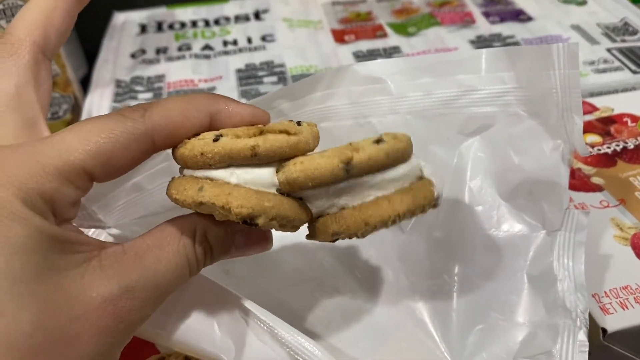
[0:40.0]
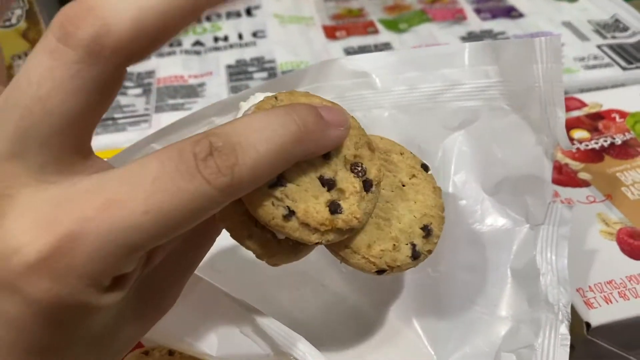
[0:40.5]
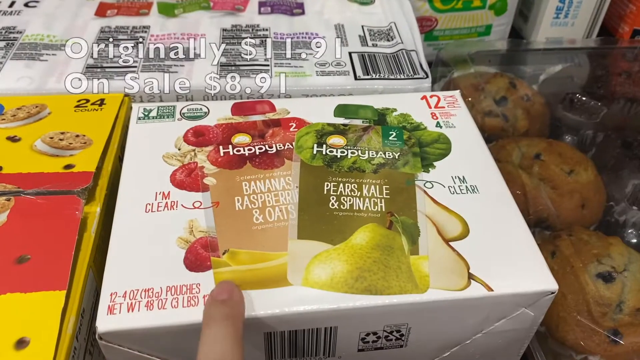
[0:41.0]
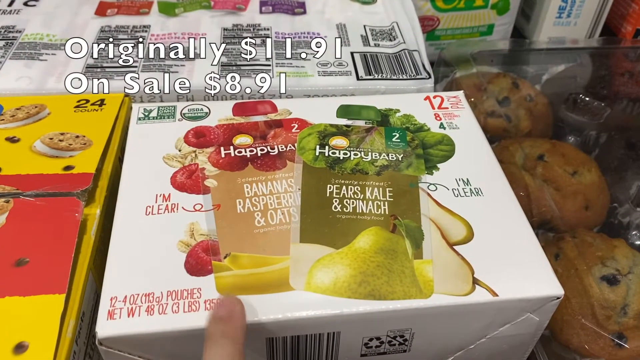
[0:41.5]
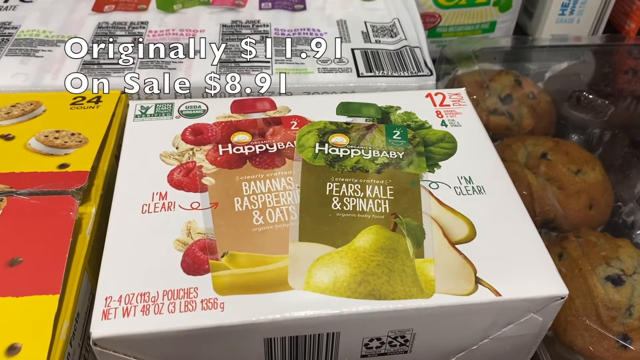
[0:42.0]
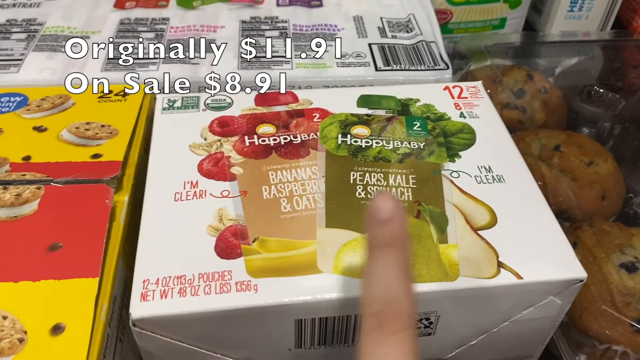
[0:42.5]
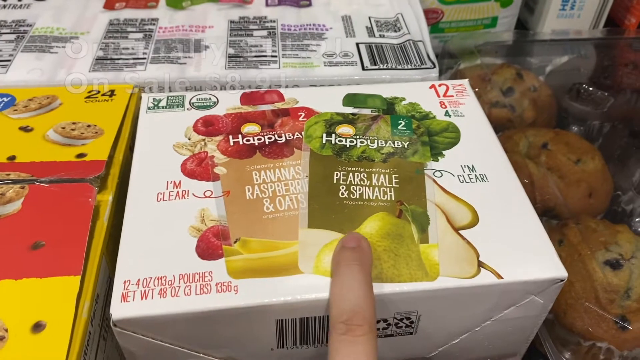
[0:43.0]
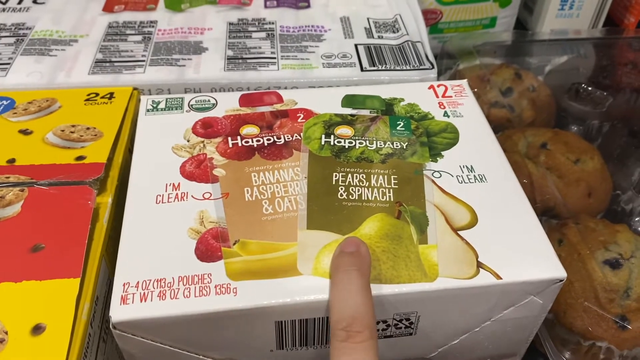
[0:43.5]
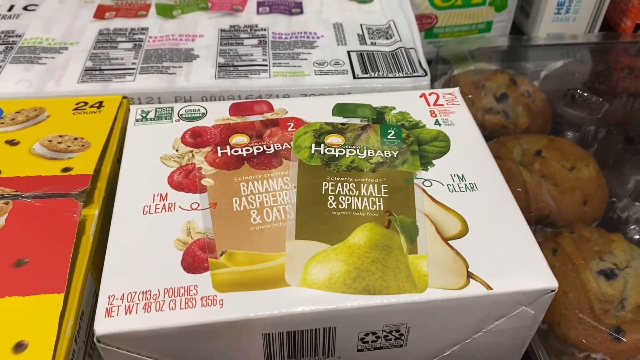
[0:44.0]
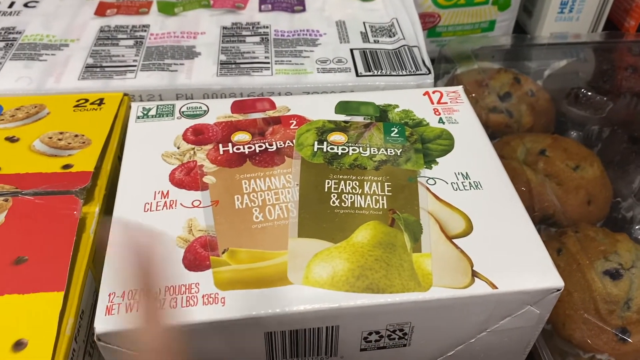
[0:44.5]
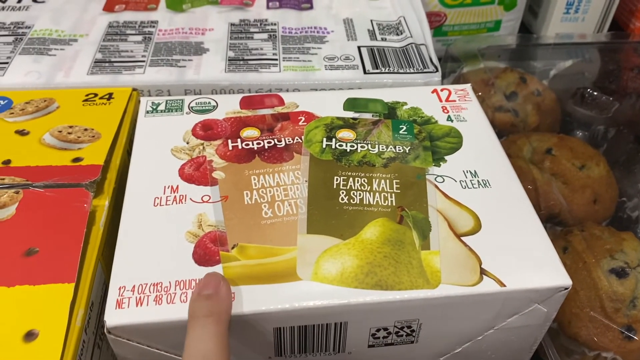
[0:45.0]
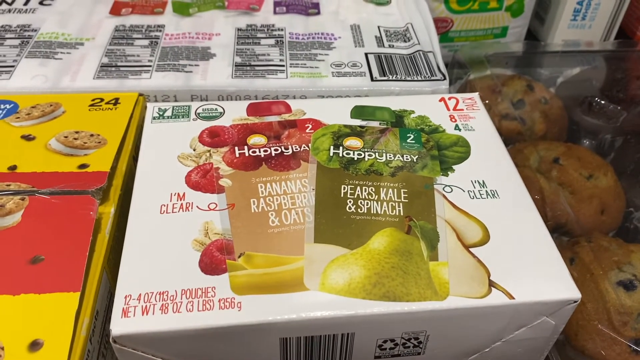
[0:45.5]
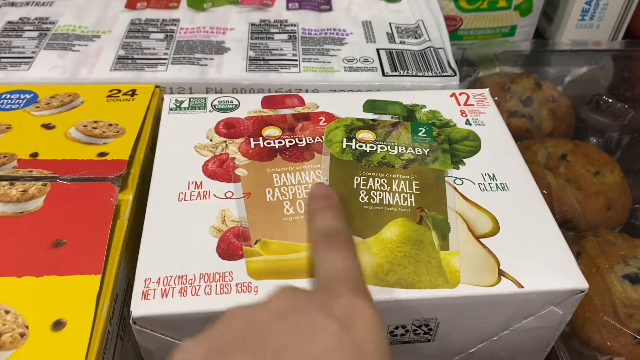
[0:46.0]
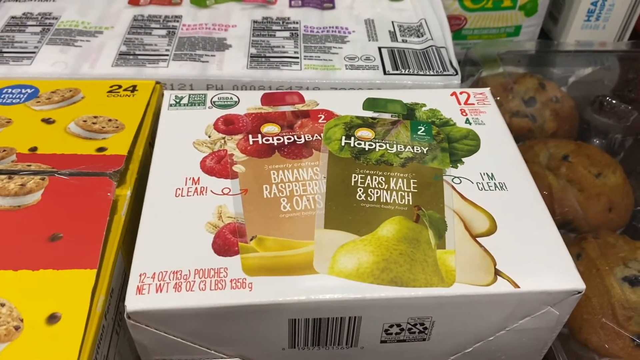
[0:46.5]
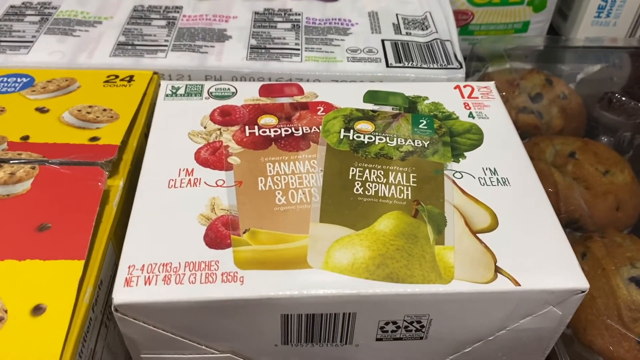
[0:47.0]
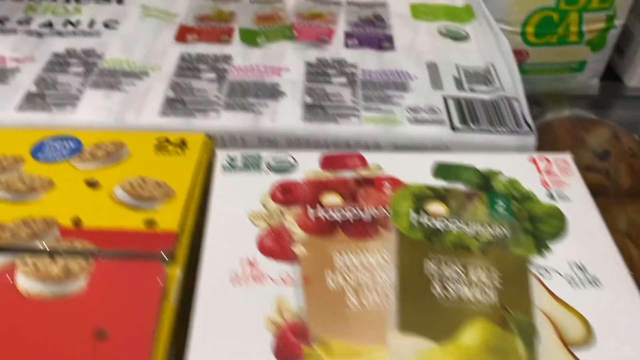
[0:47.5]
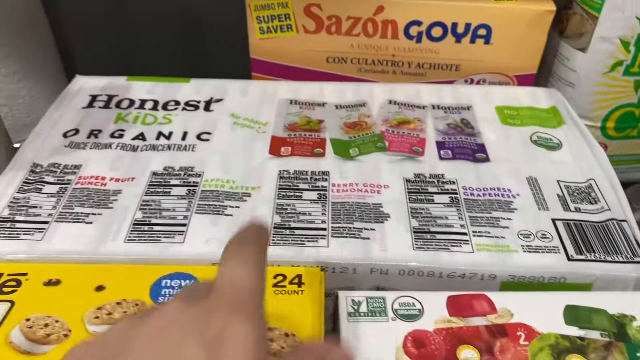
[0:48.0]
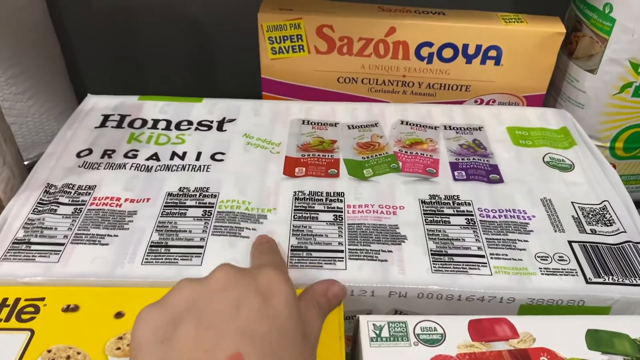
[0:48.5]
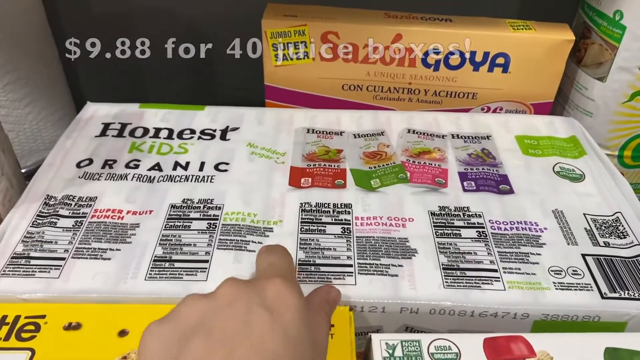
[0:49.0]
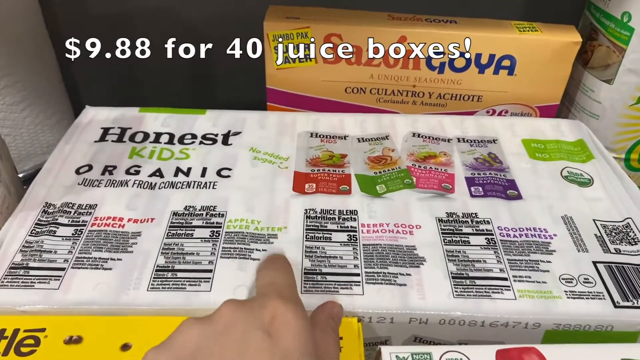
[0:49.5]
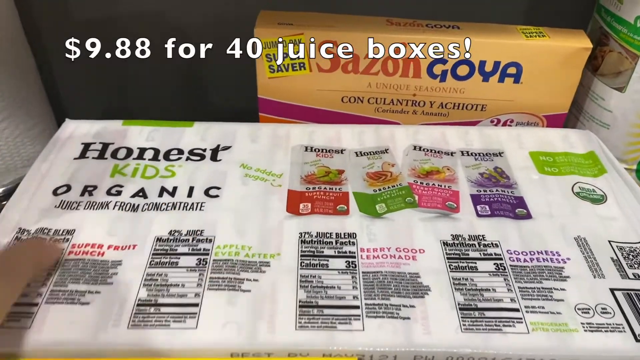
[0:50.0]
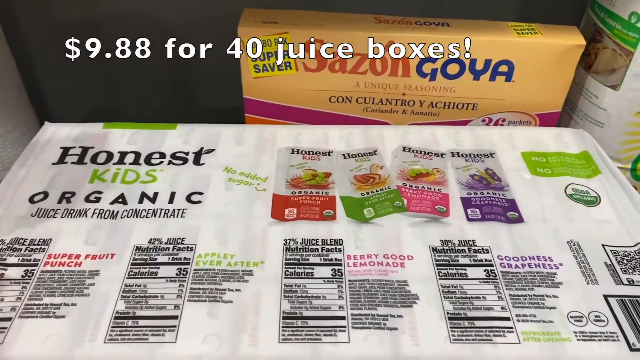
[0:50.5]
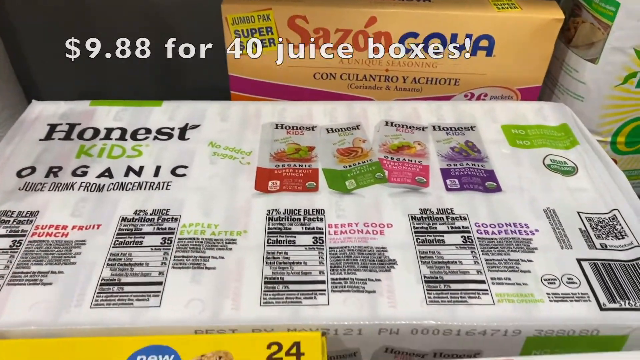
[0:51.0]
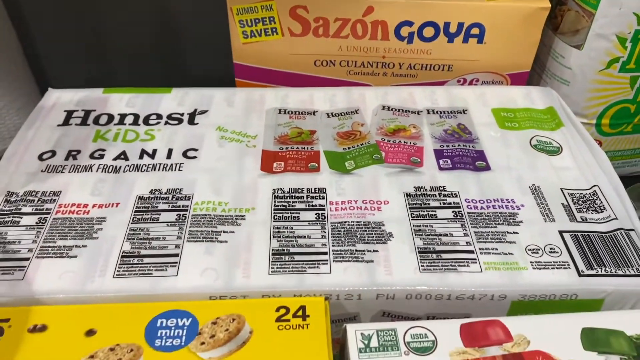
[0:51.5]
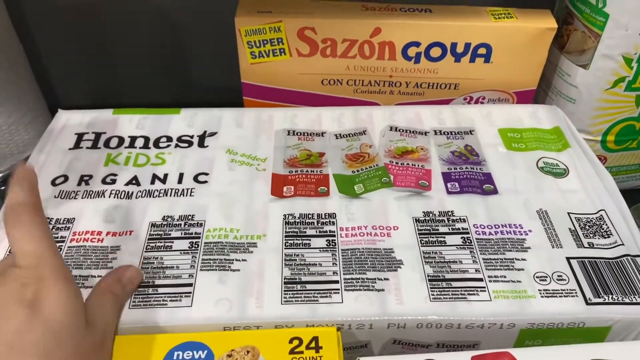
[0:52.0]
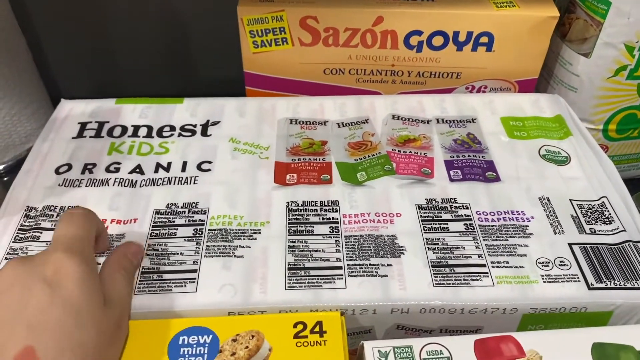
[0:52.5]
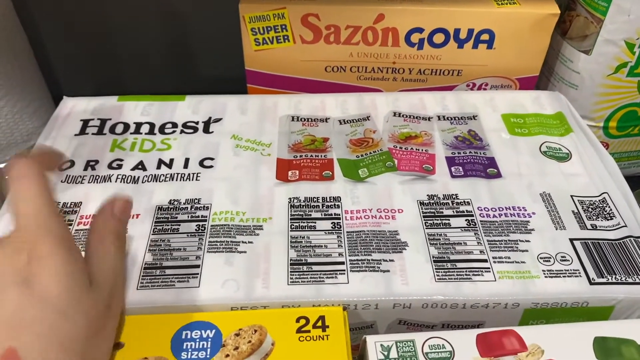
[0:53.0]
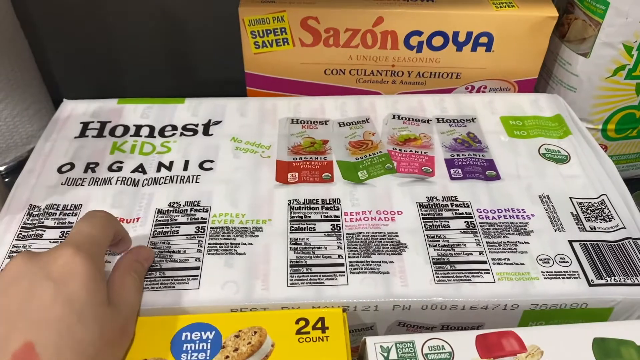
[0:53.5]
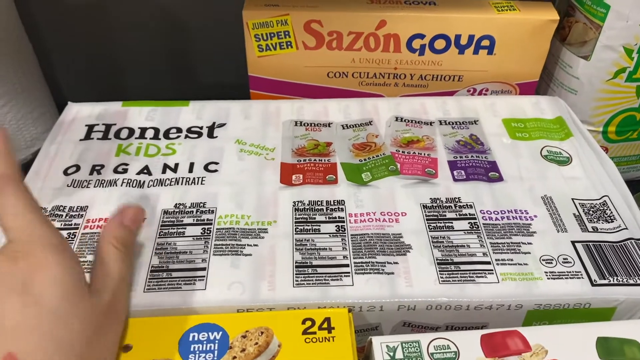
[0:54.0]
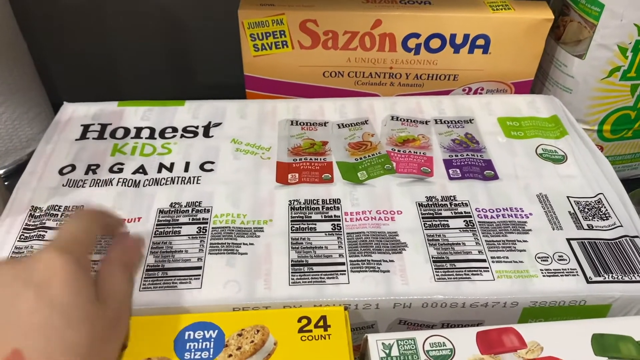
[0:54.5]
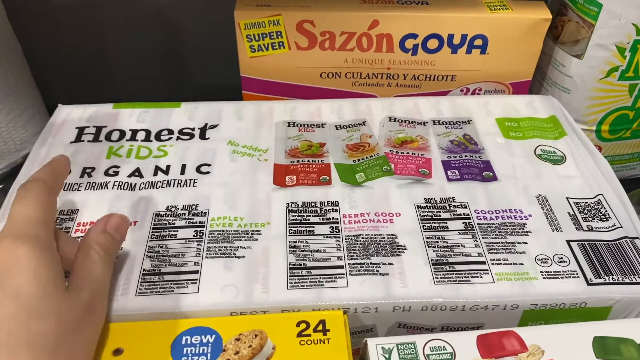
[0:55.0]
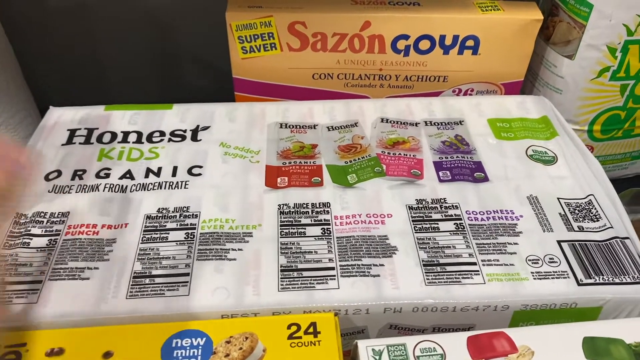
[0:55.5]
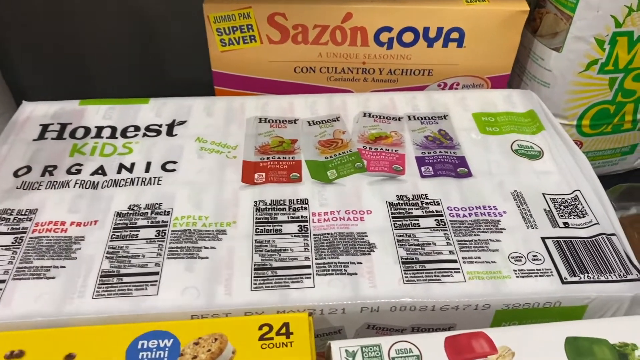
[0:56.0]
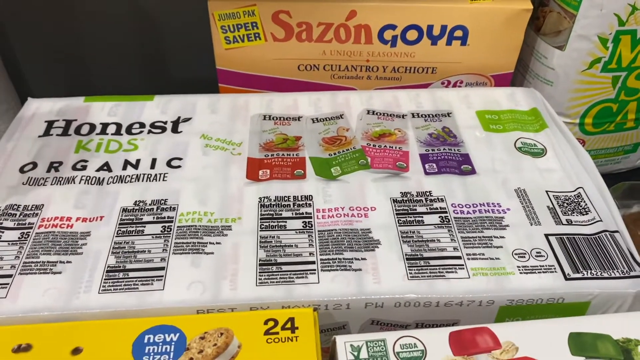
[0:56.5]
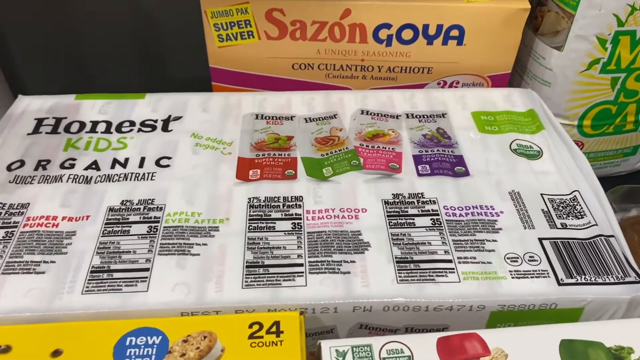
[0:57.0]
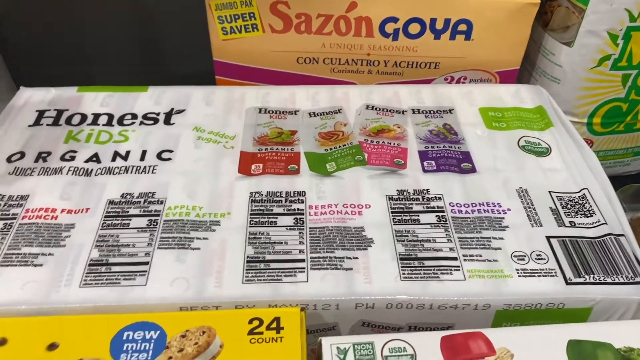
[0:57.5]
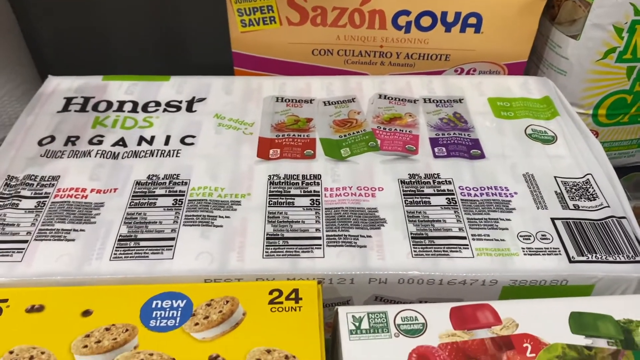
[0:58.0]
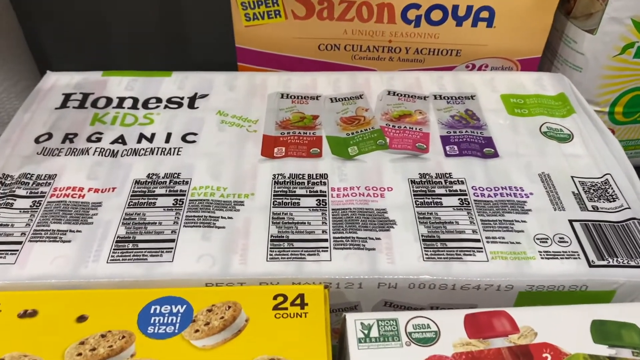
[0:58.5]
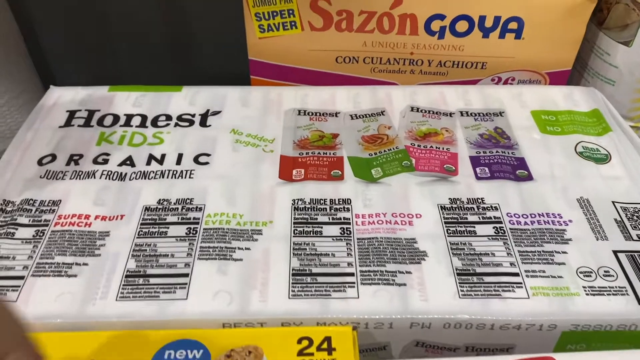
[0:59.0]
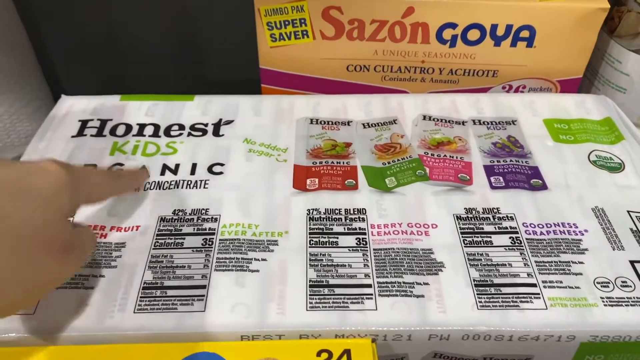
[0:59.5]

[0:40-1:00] The person's left hand is shown with the fingers spread apart, the index finger and thumb gripping a section of the ice cream cookie sandwiches. Two cookie sandwiches are fused together, and the person holds the one on the left, then rotates the hand so the top of the cookies is visible. The scene cuts to a white box with "happy baby" written on it, containing pouches: the left pouch has banana, raspberry and oats, and the right pouch has pears, kale and spinach. Pricing is labeled at the top, showing an original price of $11.91 and a sale price of $8.91. The person points with the index finger to the box and the packaging.